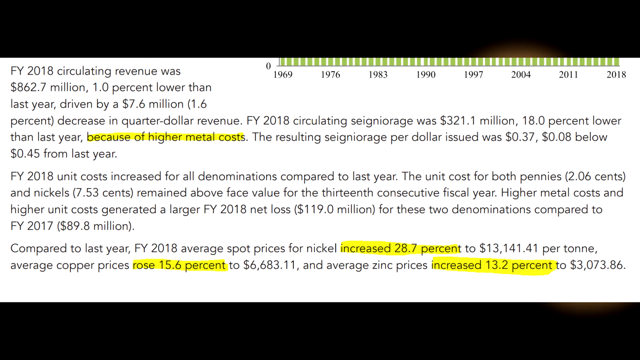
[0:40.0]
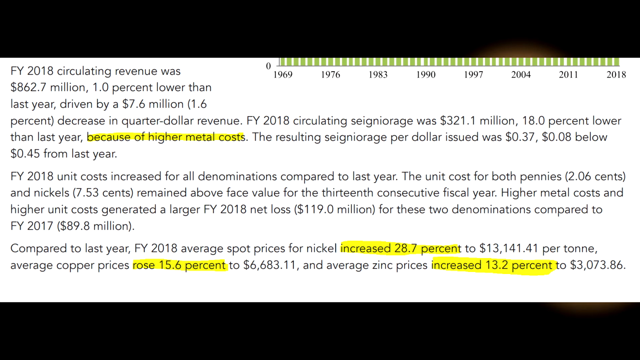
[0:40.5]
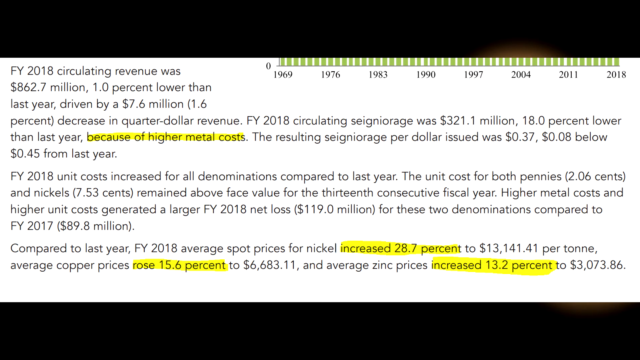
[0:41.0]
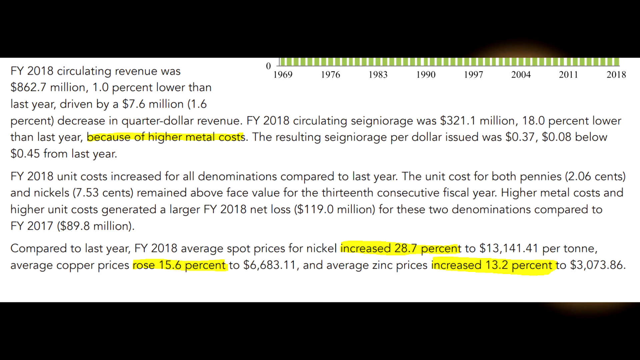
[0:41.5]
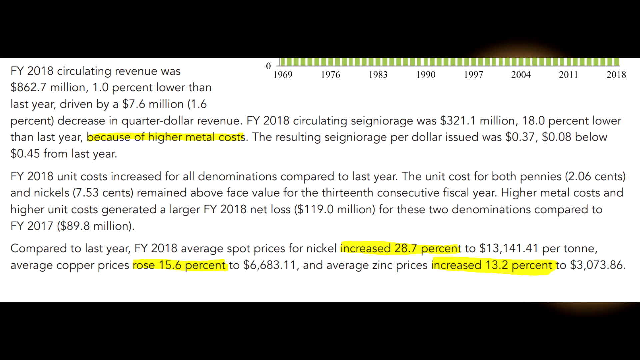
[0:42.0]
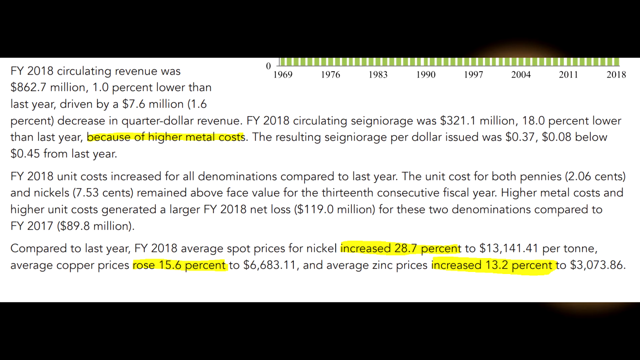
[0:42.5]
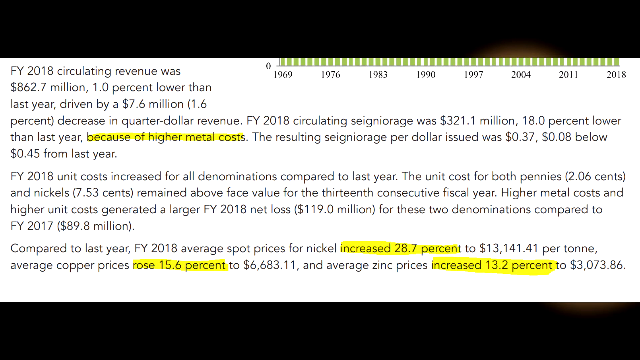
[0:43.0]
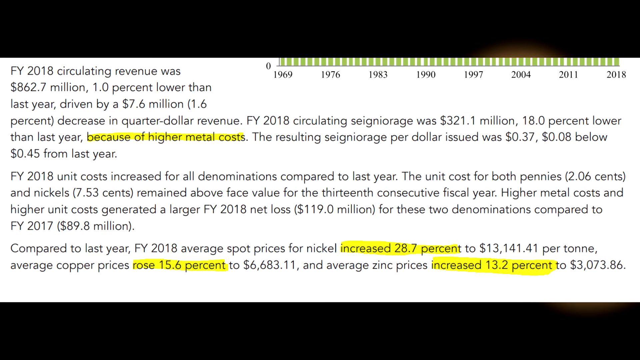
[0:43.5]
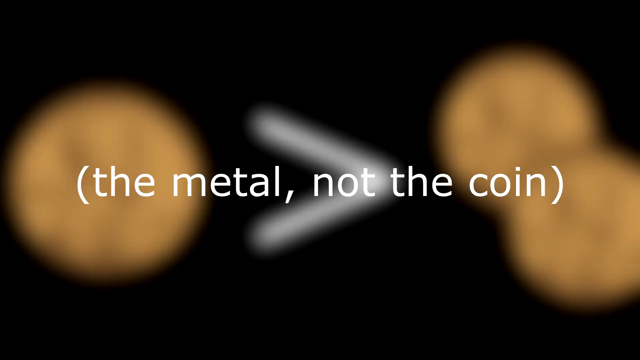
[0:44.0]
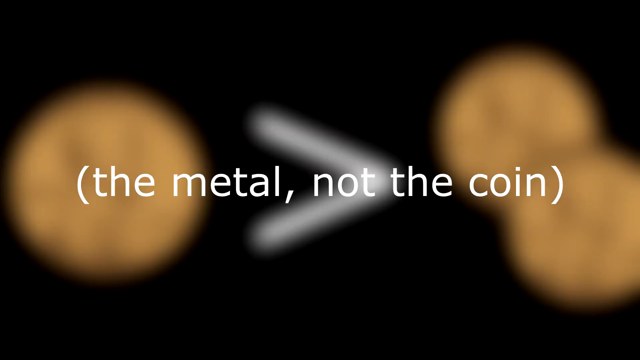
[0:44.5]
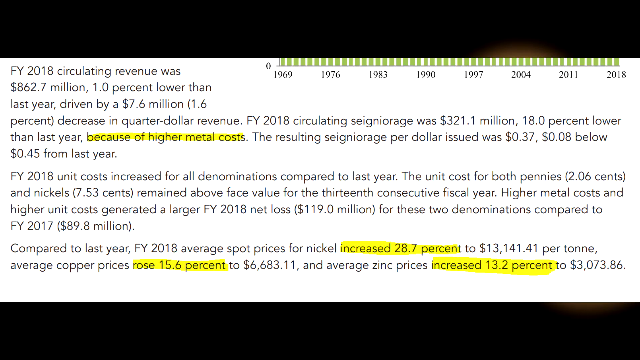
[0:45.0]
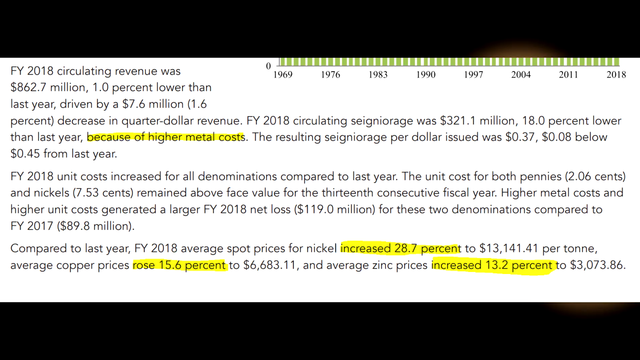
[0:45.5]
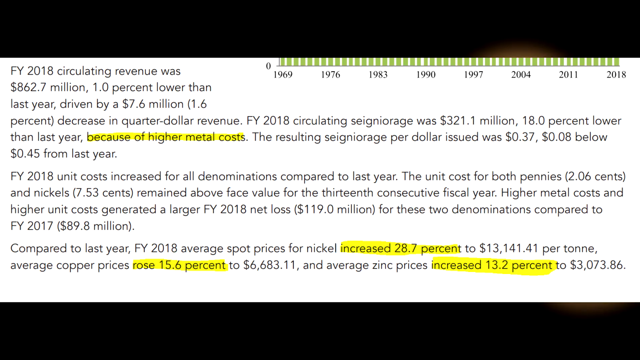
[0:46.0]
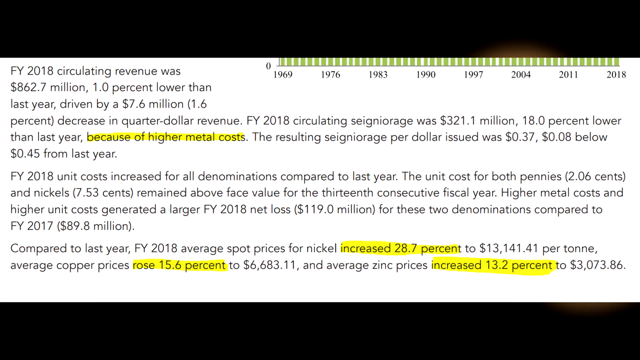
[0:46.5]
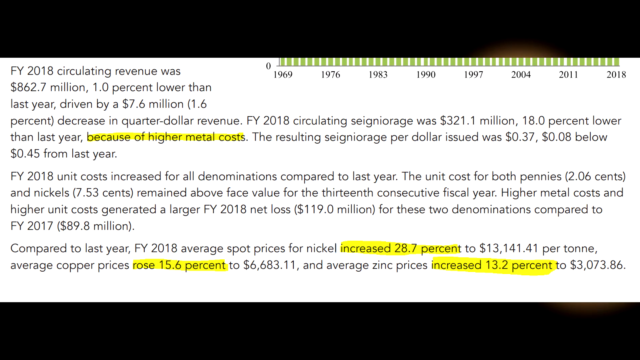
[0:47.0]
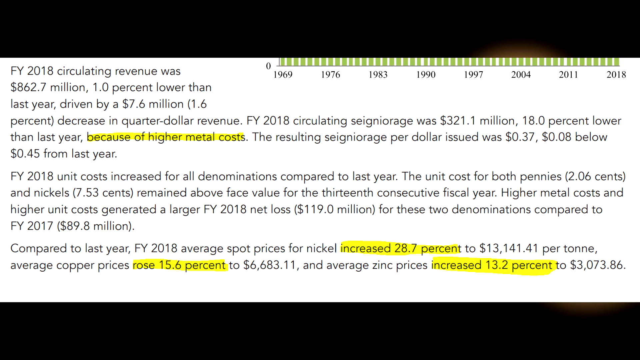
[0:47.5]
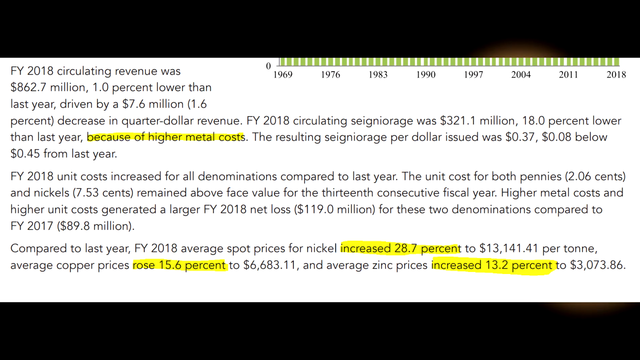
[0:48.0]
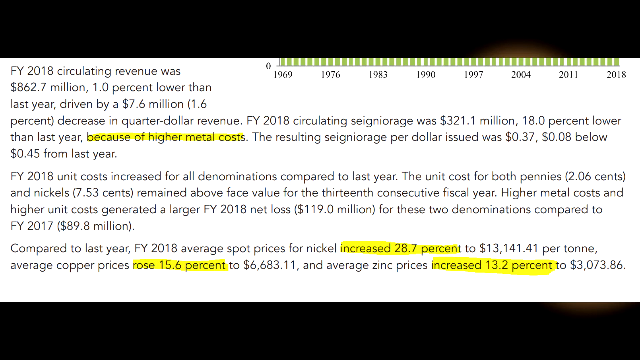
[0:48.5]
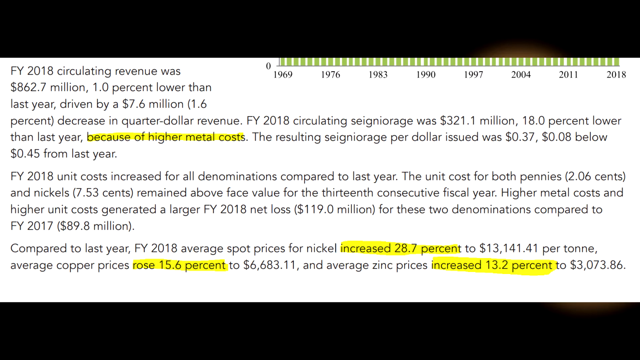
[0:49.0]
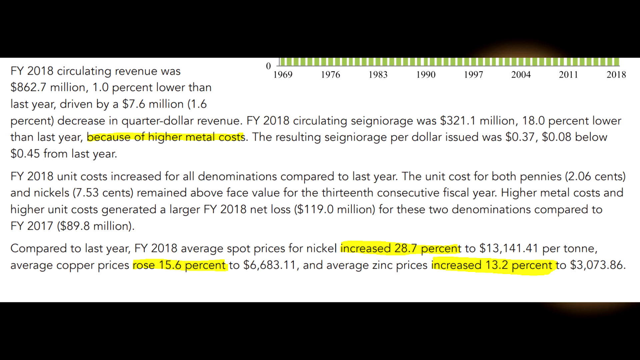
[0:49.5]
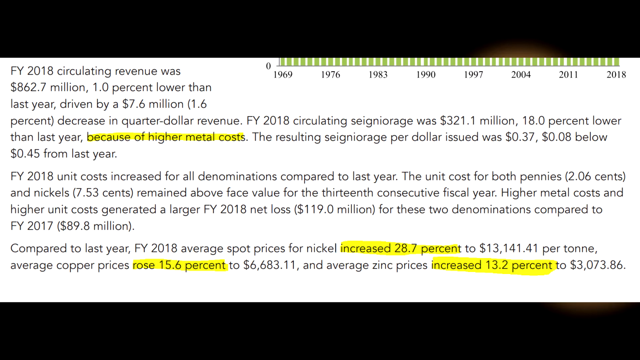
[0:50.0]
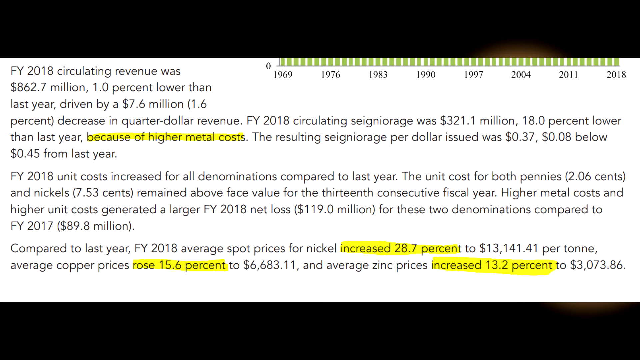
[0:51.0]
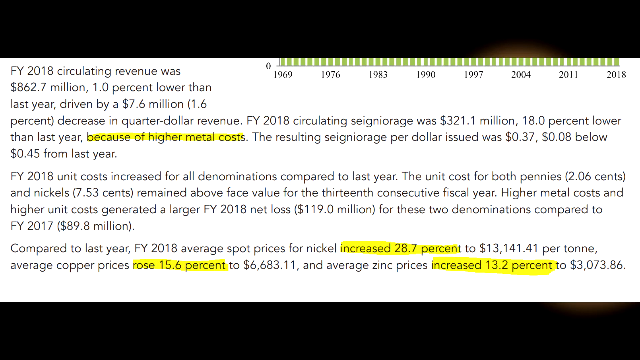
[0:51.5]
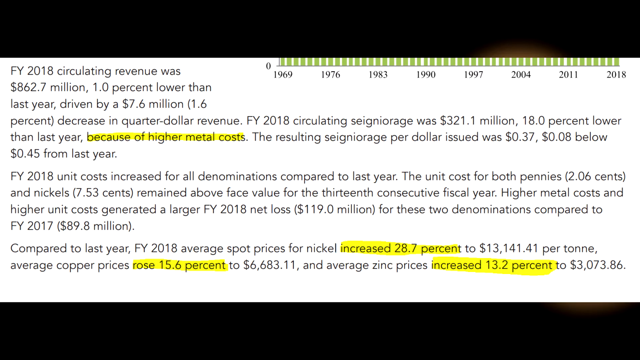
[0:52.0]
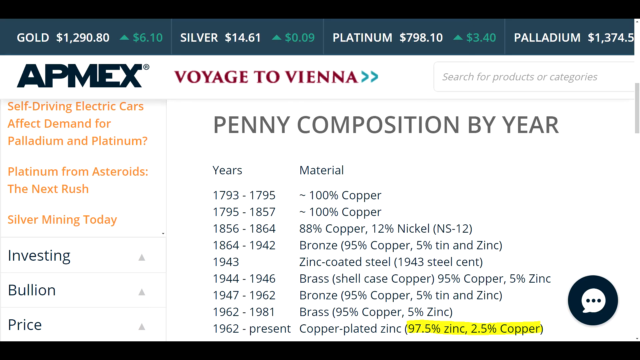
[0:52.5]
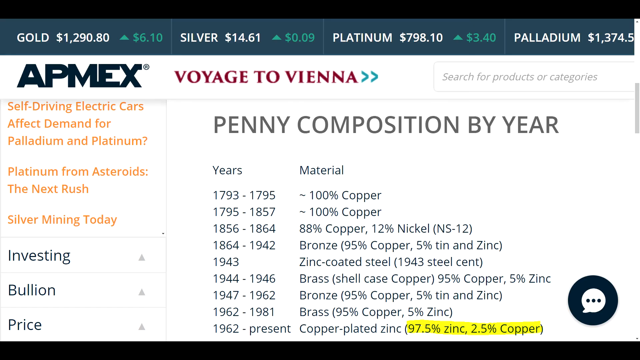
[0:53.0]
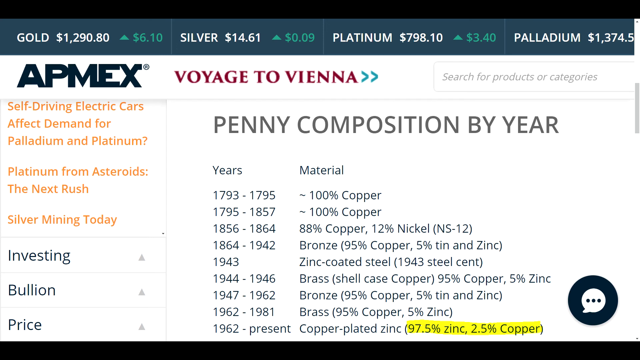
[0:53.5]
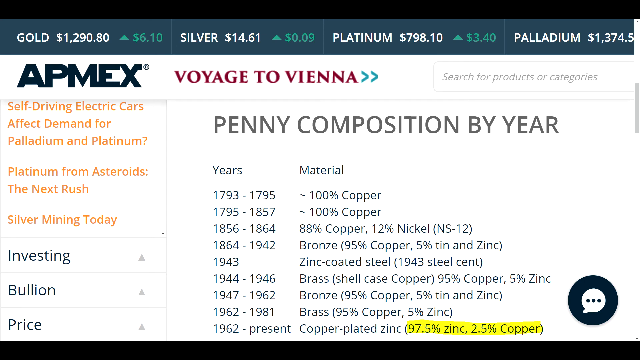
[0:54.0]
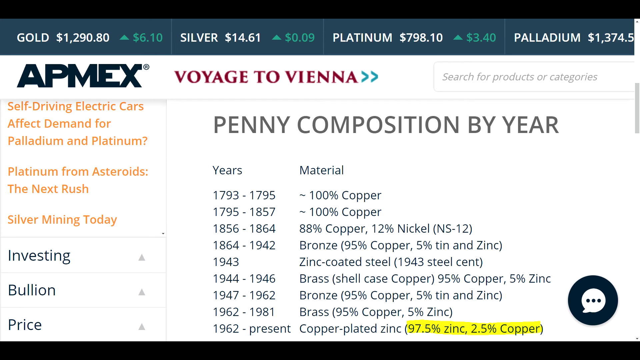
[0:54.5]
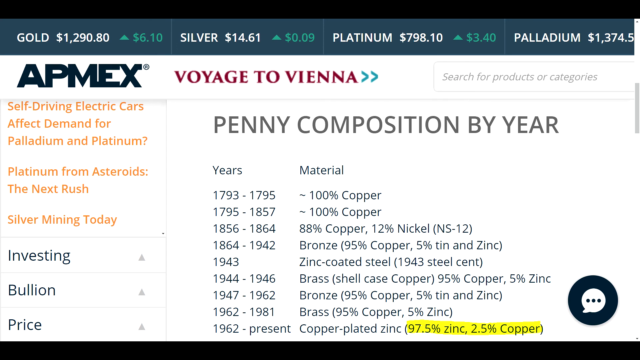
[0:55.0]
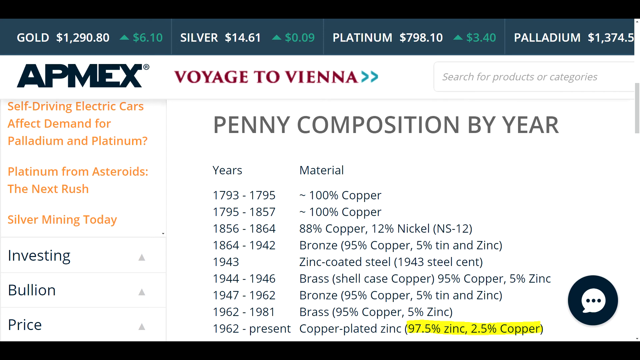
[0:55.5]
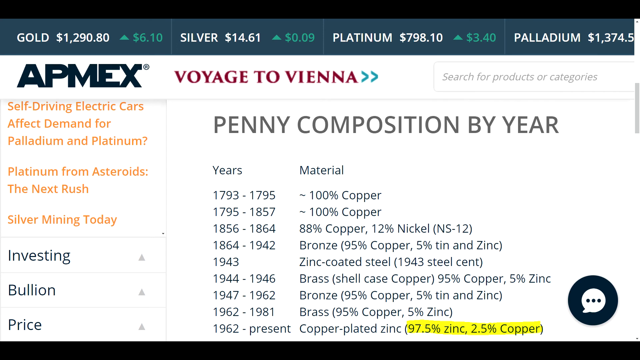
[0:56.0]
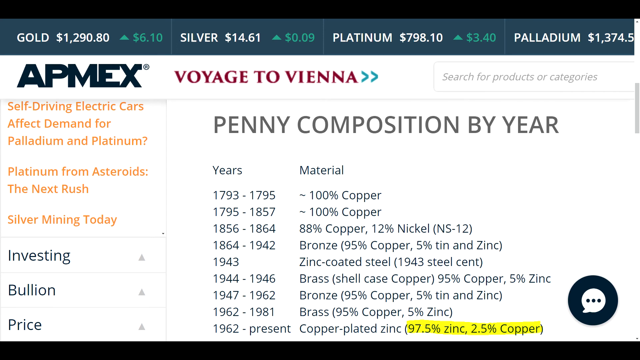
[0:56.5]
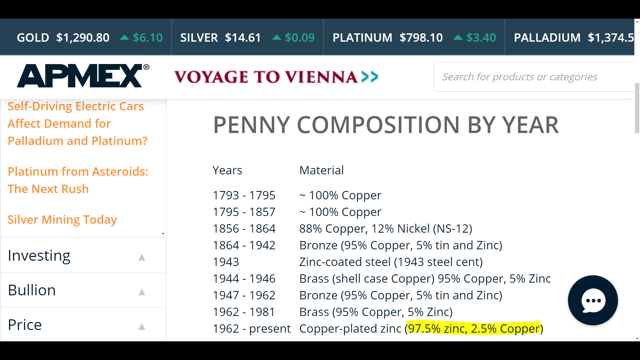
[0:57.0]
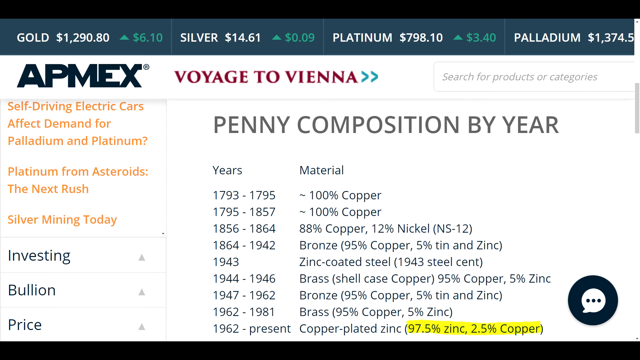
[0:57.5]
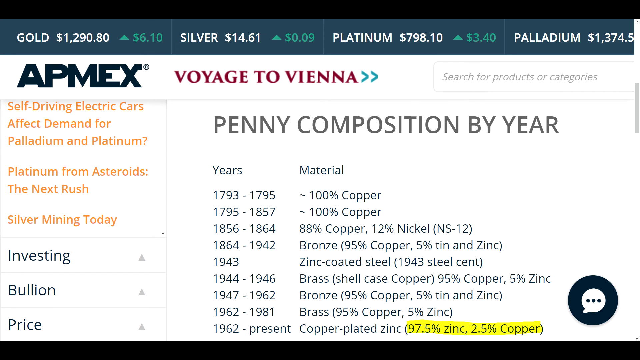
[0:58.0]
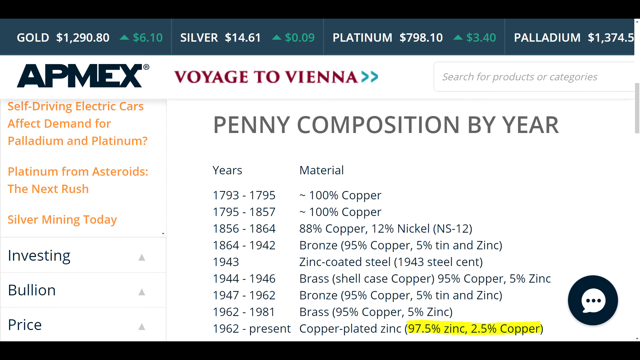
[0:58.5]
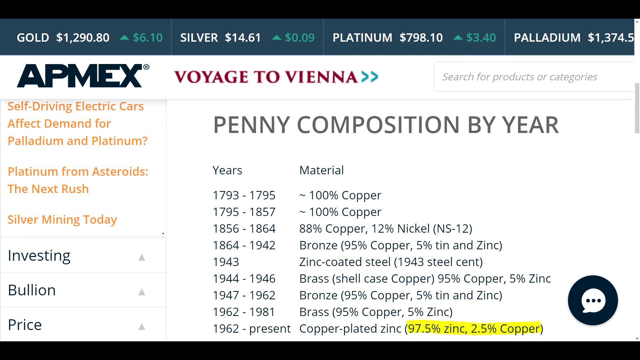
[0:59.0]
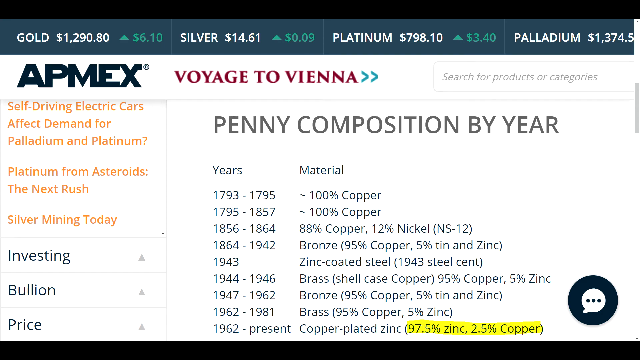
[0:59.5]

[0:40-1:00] A slide covers fiscal year circulating revenue in the United States: circulating revenue was 862.7 million, 1% lower than the previous year, driven by a 7.6 million decrease in quarter dollar revenue. In financial year 2018 metal costs were higher, unit costs increased for all denominations compared to the previous year, and the unit cost for pennies and nickels remained above face value for the 13th consecutive year, driven by higher metal costs. Compared to the previous year, fiscal year 2018 average spot prices for nickel increased 28.7% to $13,141.41 per tonne, average copper prices rose 15.6% to $6,683.11, and average zinc prices increased 13.2% to $3,073.86. Next comes penny composition by year: from 1793 to 1795 coins were 100% copper, which continued until 1856 when they became 88% copper and 12% nickel. The composition changed over time; between 1962 and 1981 coins were made of brass, 95% copper and 5% zinc.